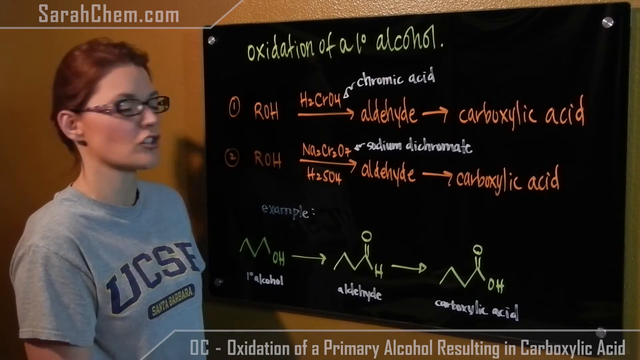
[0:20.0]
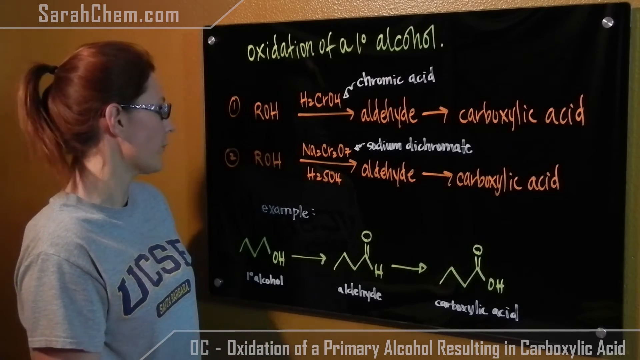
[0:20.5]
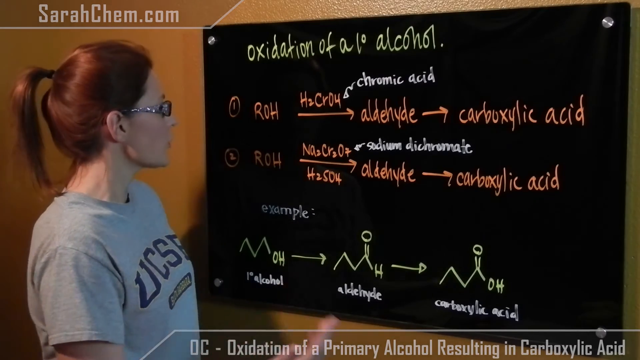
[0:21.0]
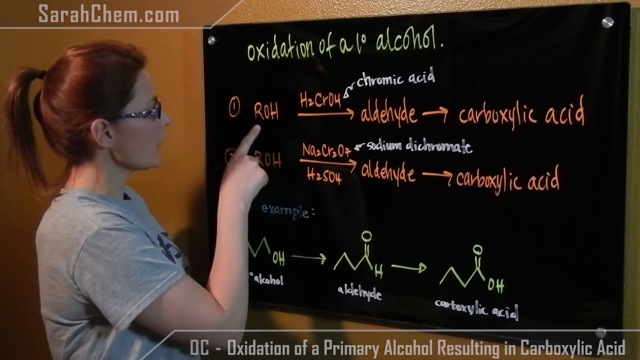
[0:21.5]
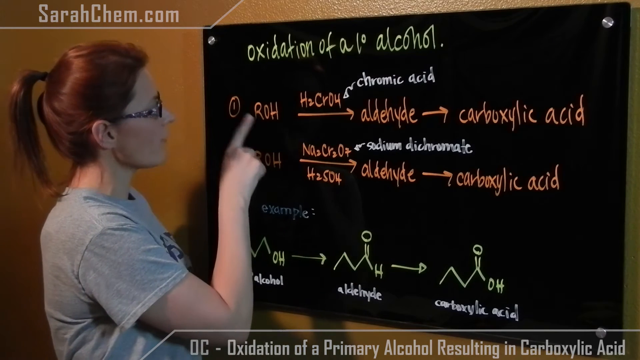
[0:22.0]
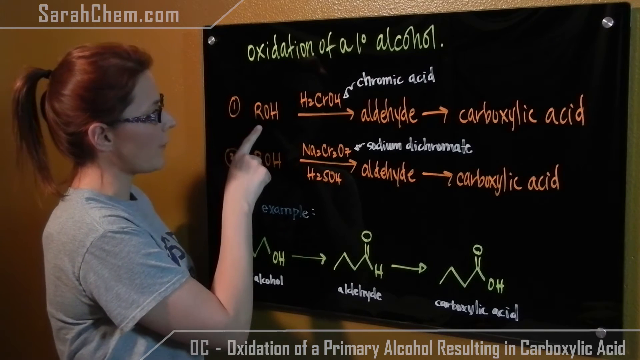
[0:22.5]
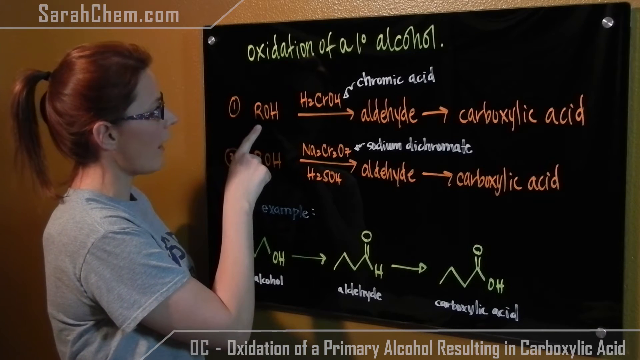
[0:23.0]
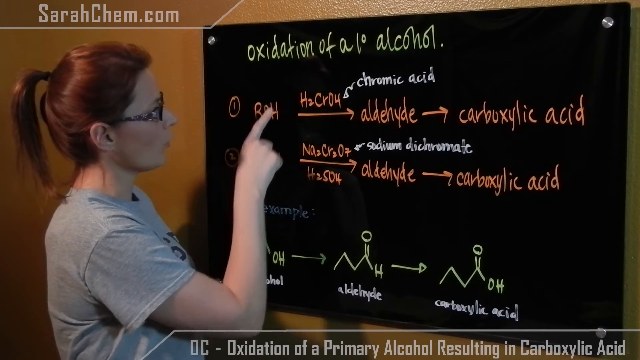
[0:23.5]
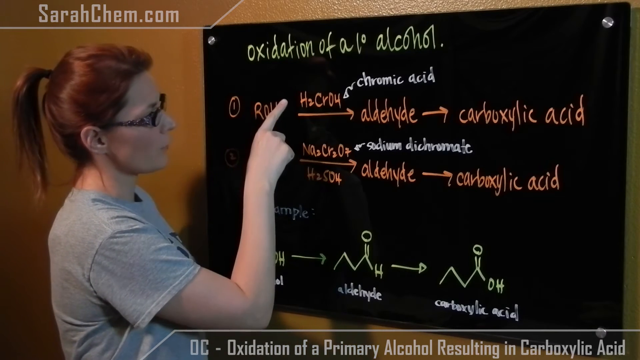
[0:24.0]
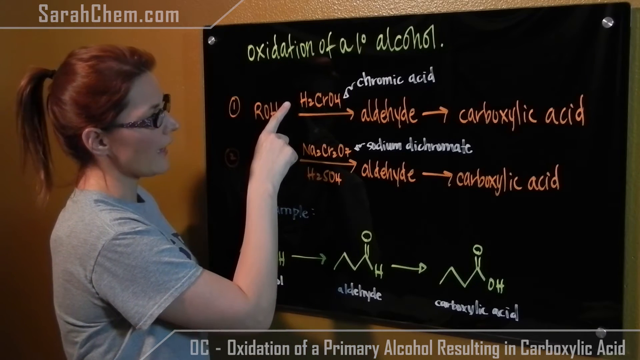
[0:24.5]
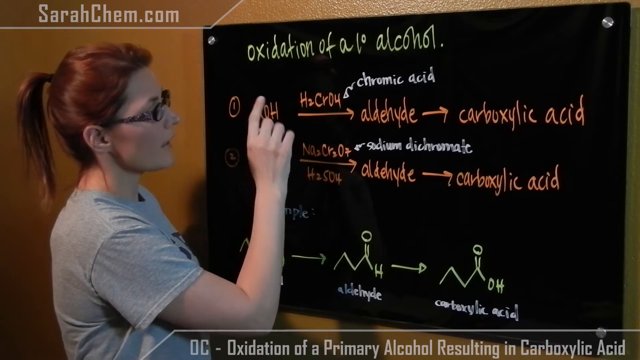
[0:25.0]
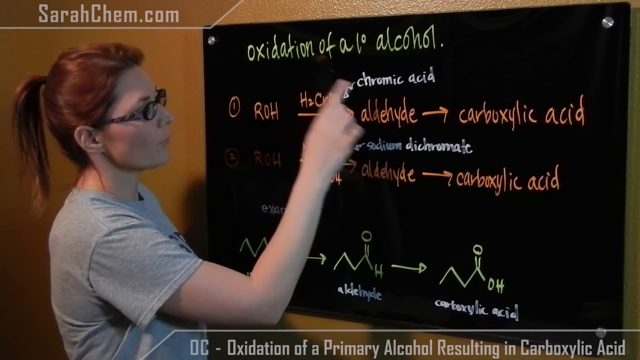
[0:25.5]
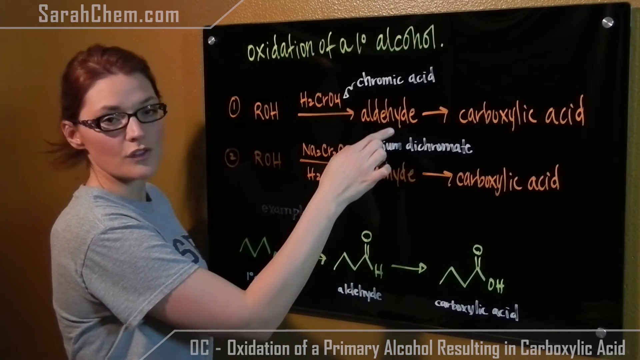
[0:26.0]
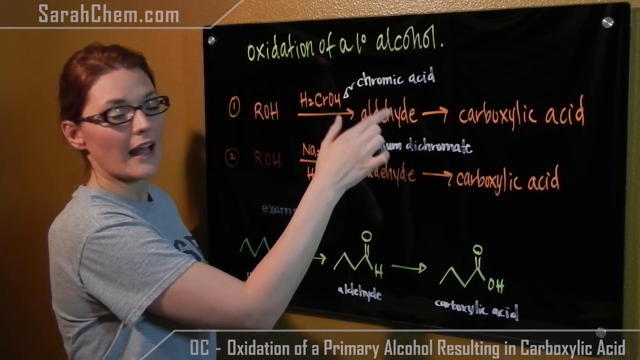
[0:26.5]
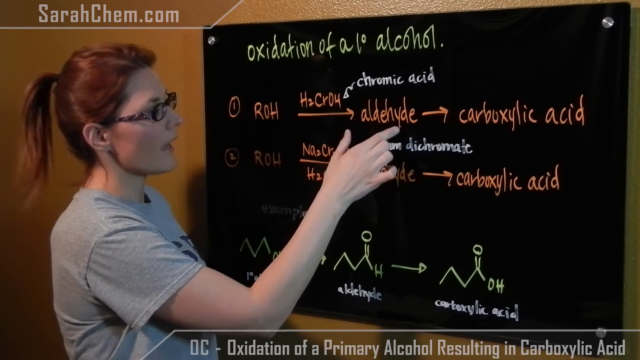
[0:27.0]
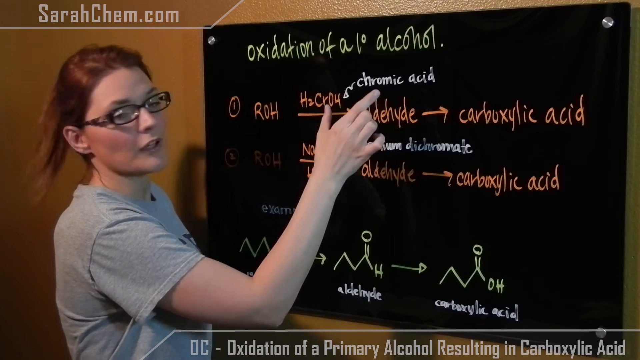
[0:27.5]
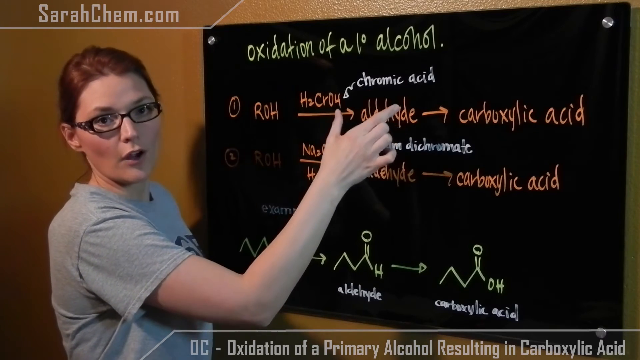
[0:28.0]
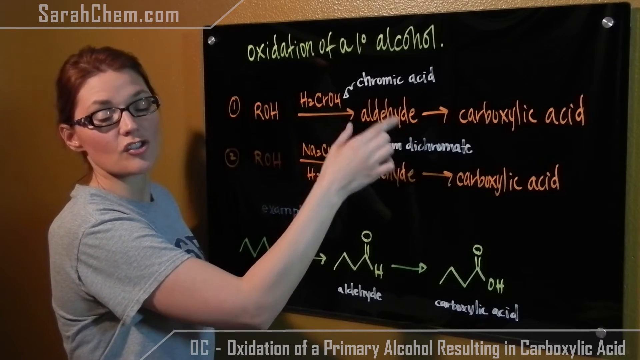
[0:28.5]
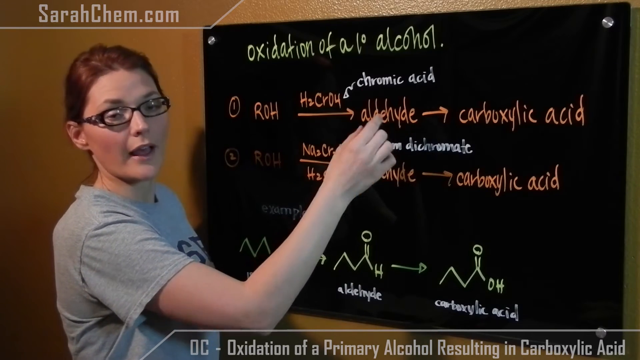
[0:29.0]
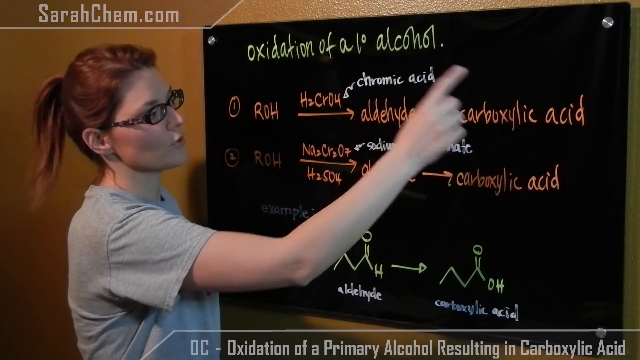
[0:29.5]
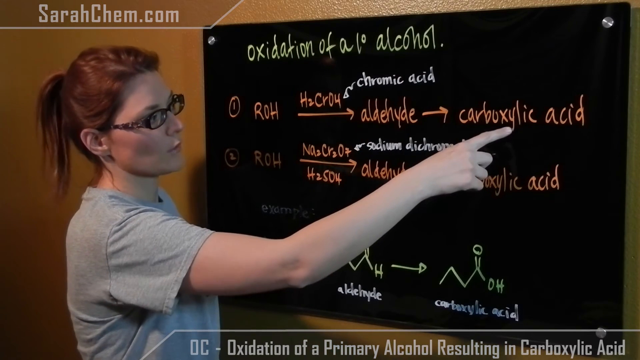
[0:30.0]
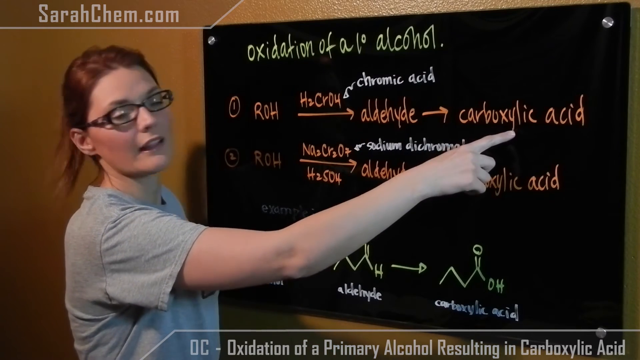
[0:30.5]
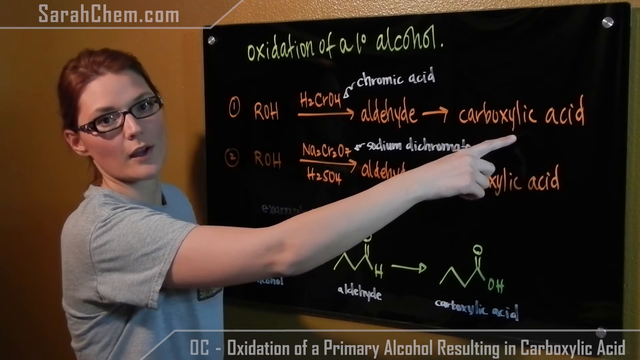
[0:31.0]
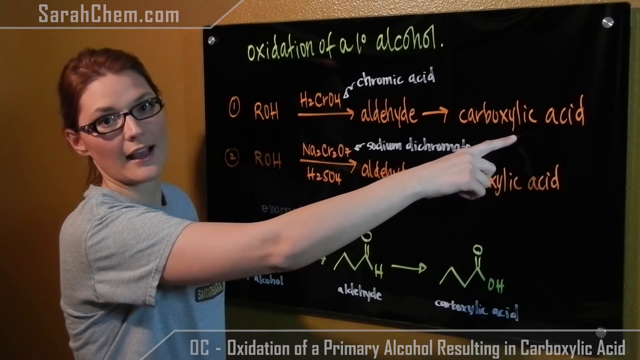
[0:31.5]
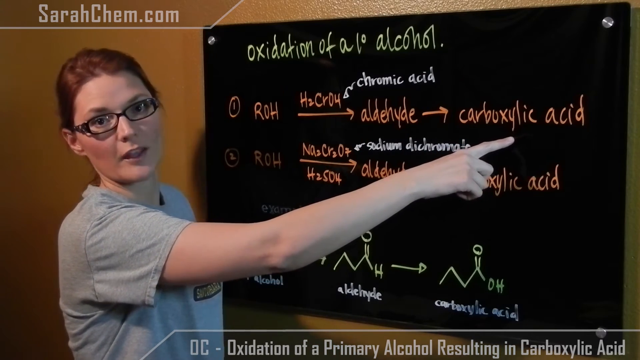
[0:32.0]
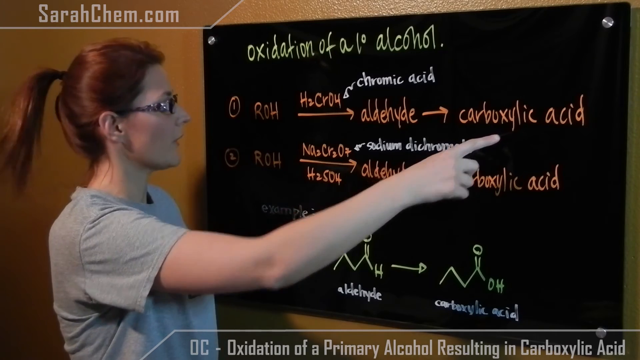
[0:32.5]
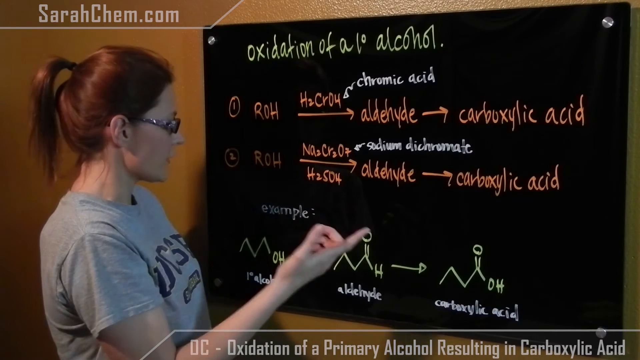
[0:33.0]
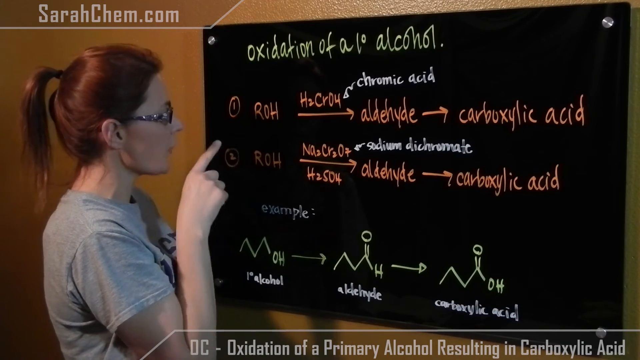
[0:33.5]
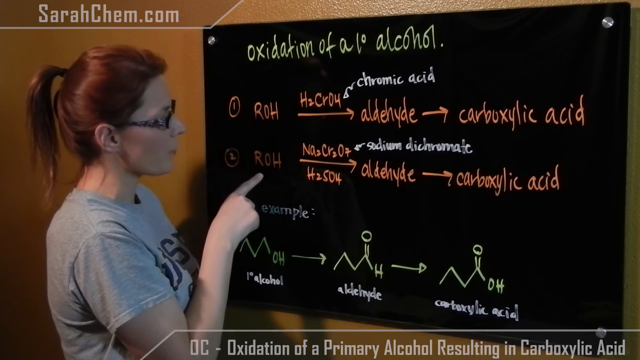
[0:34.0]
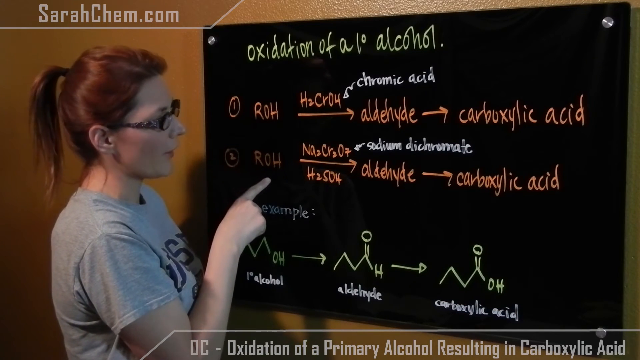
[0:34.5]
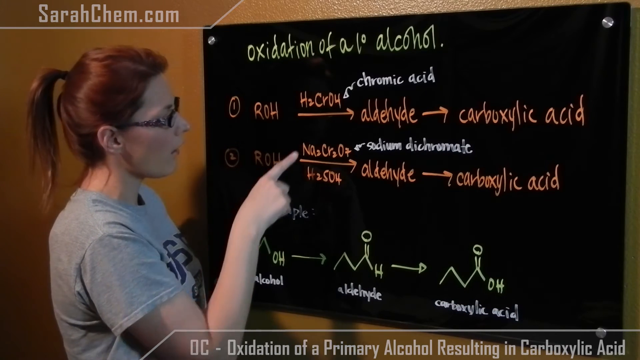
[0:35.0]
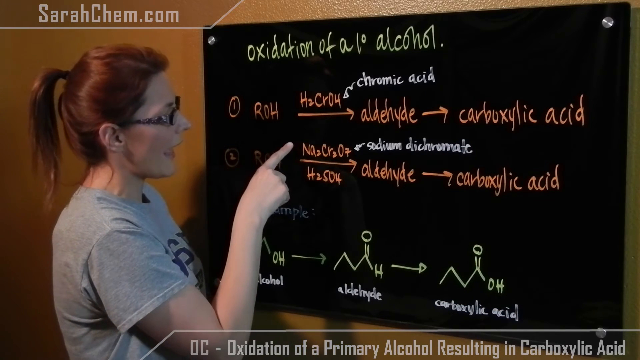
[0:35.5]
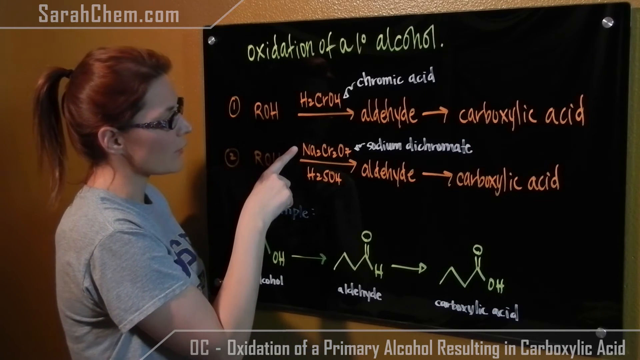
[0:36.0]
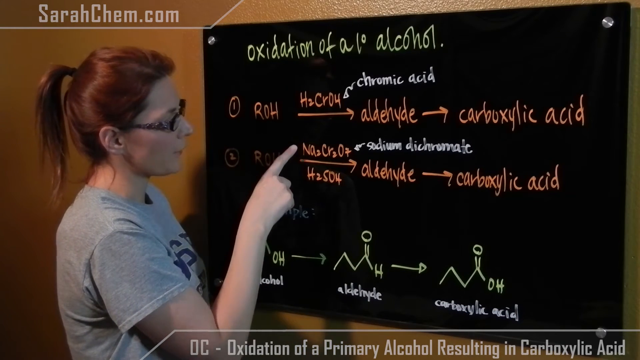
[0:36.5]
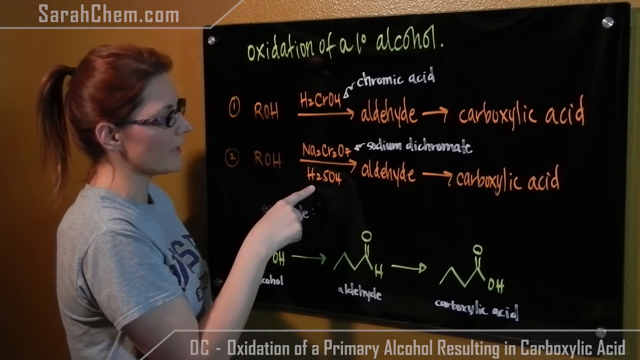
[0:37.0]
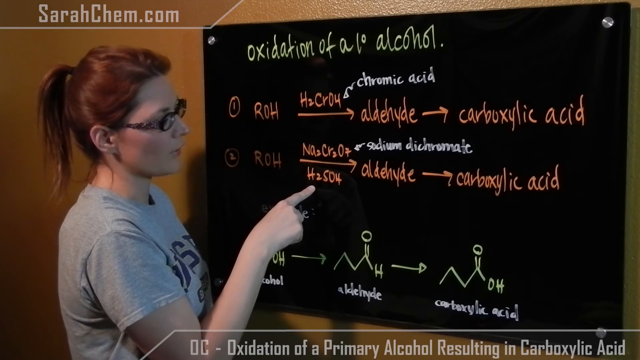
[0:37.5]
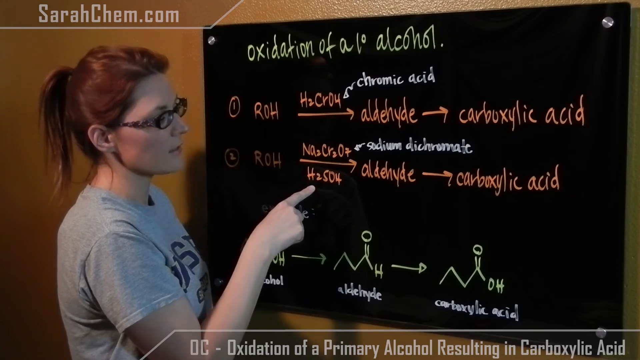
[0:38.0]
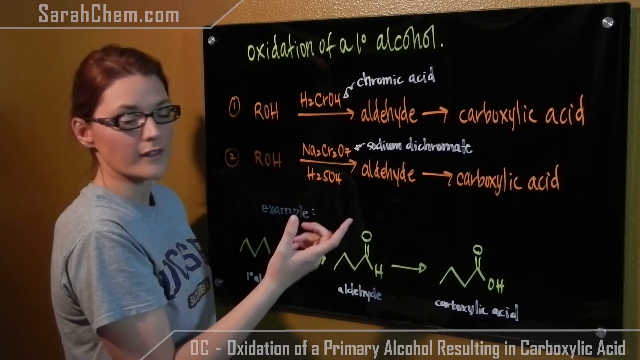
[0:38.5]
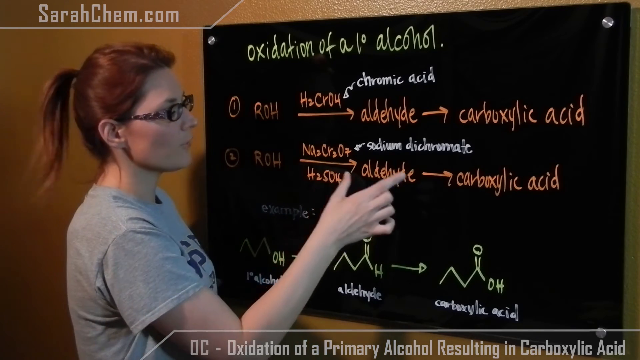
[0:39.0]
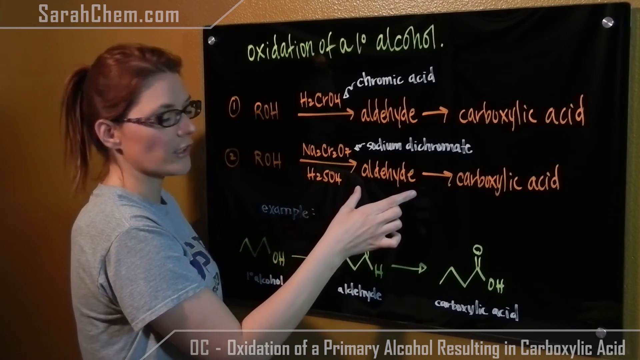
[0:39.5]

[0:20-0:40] Sarachem is on the left and the blackboard is on the right, with "sarachem.com" at the top left. The board reads "oxidation of alcohol" and shows the chemical formulas. Sara explains, starting with number one: ROH goes to aldehyde, then to carboxylic acid, with chromic acid between ROH and aldehyde. Sara points at number two, ROH, with an arrow going to aldehyde, sodium dichromate between ROH and aldehyde, and then on to carboxylic acid. She continues explaining in the same setting and the same outfit. Her hair is red, and the background walls of the building are brownish. She wears the grey t-shirt with writing on the chest reading "UCSF".